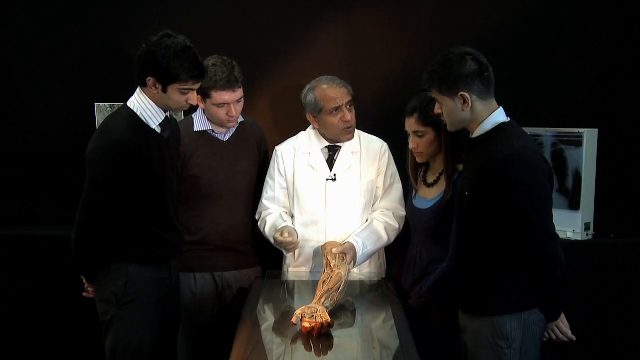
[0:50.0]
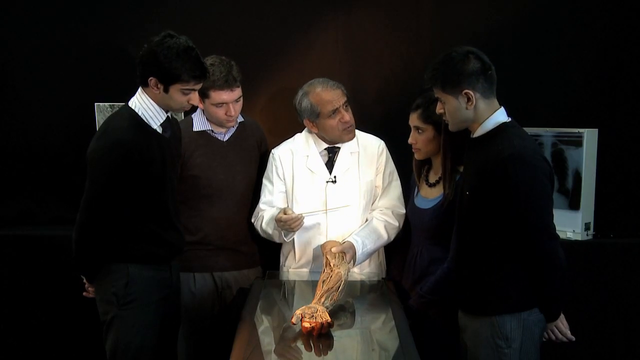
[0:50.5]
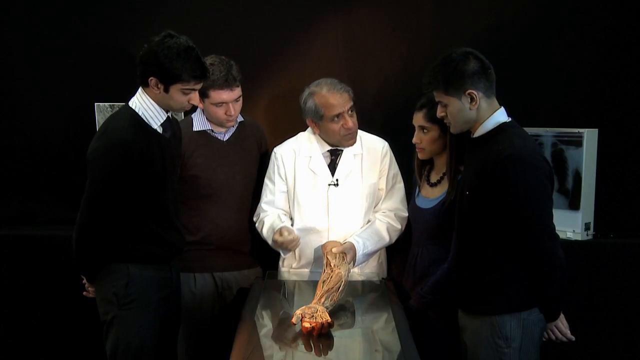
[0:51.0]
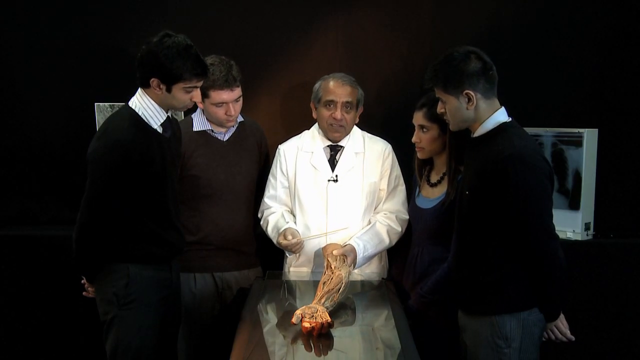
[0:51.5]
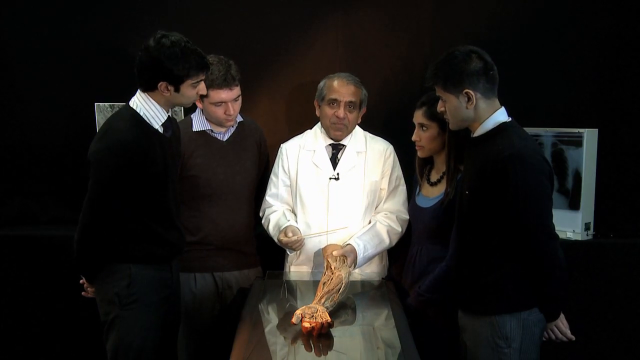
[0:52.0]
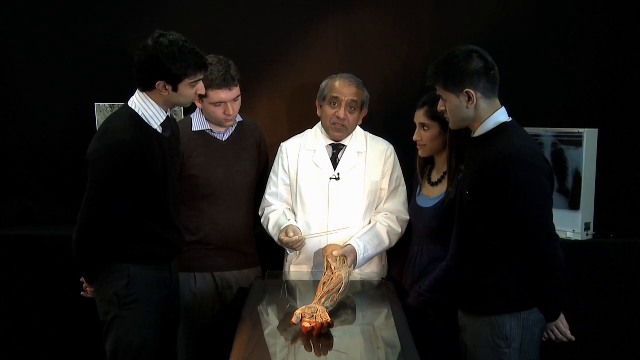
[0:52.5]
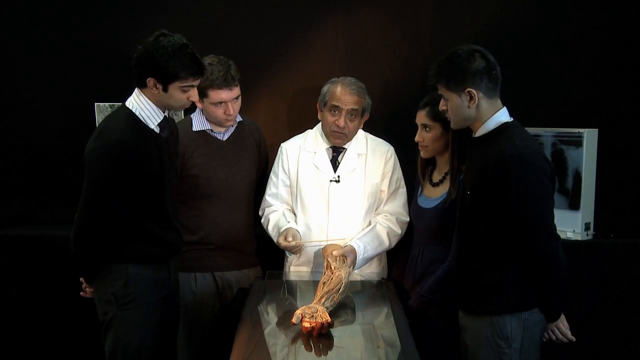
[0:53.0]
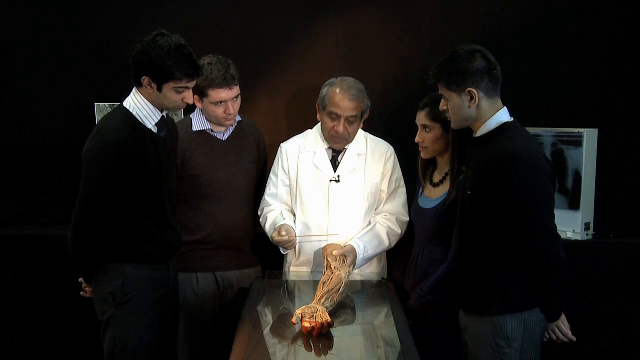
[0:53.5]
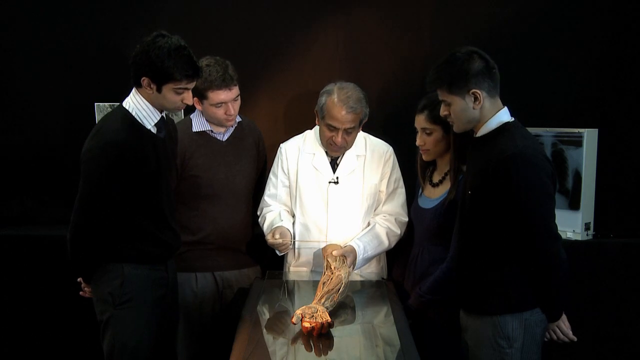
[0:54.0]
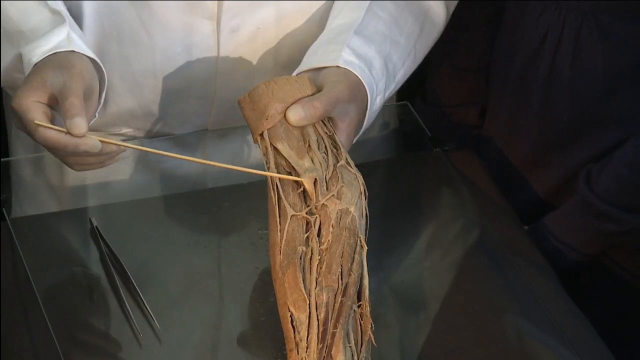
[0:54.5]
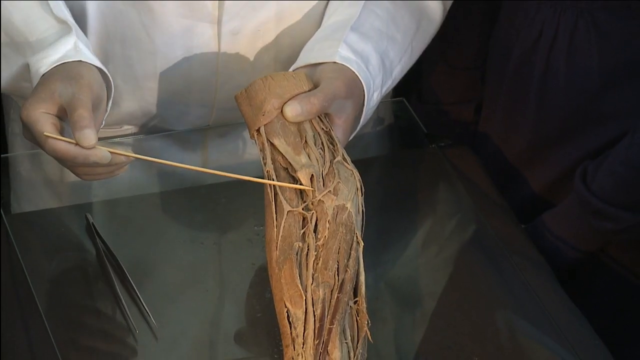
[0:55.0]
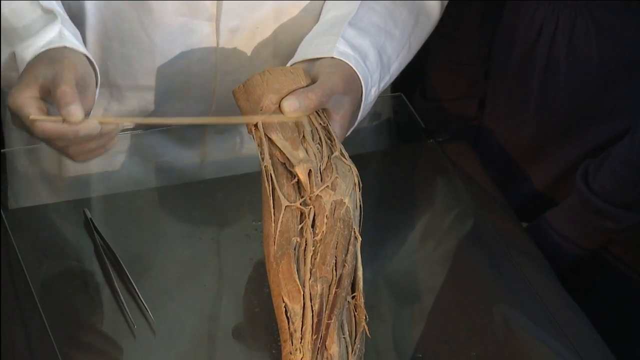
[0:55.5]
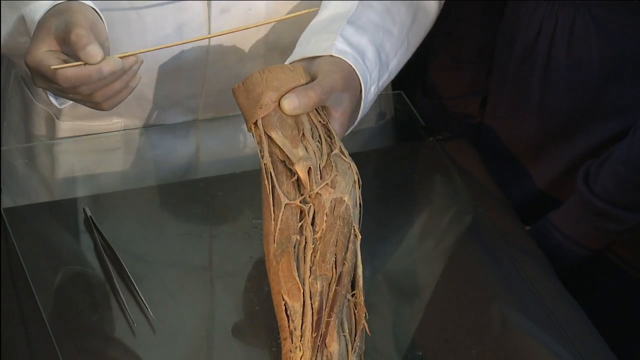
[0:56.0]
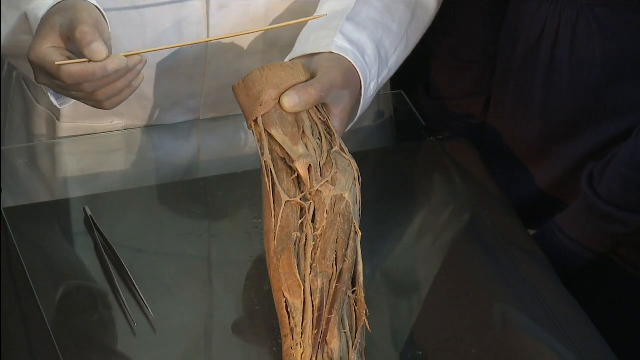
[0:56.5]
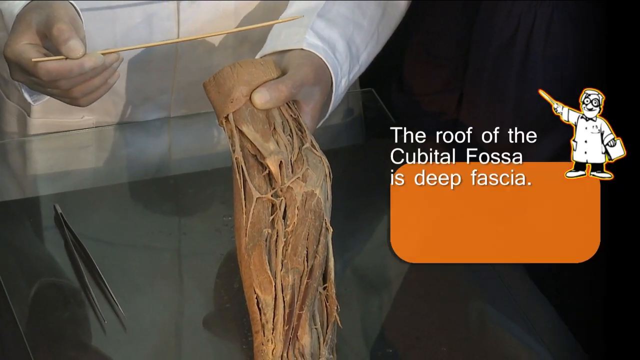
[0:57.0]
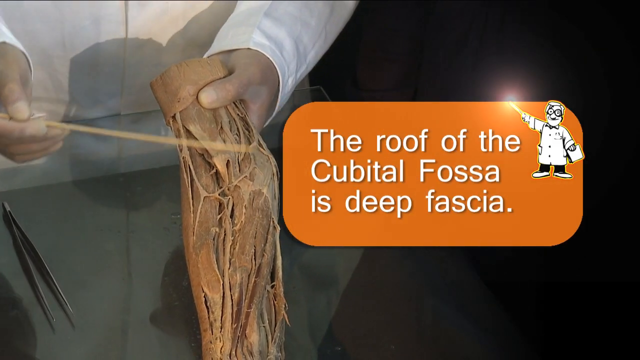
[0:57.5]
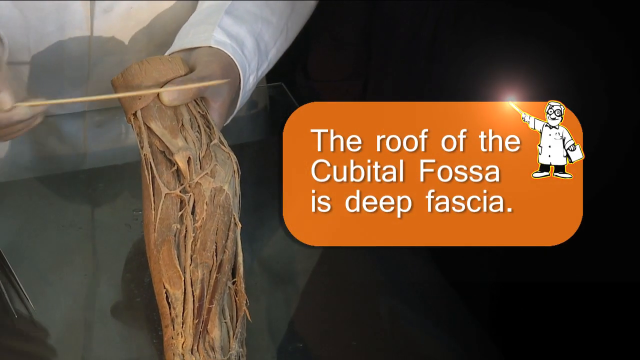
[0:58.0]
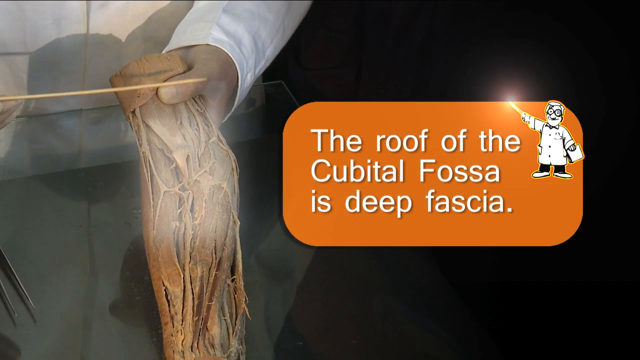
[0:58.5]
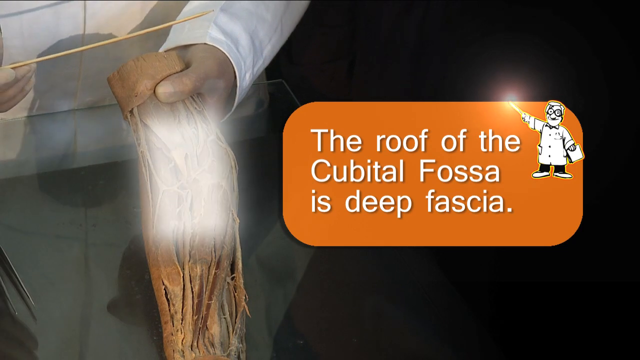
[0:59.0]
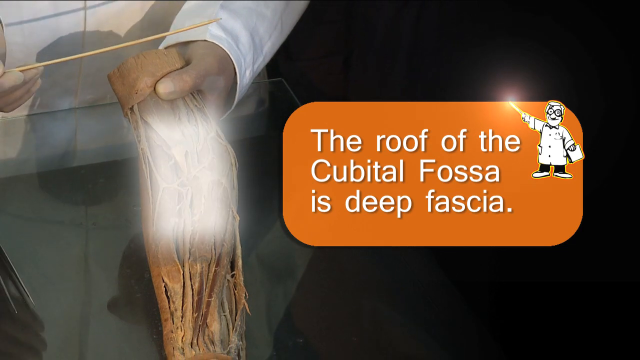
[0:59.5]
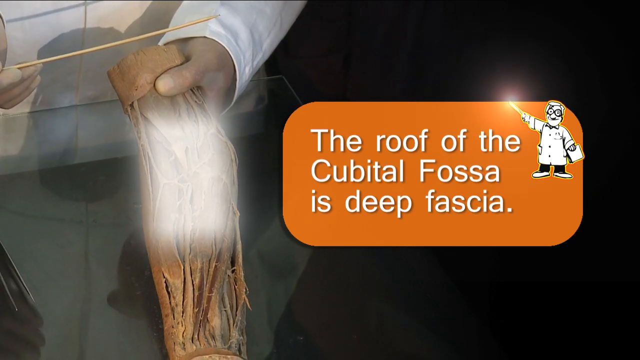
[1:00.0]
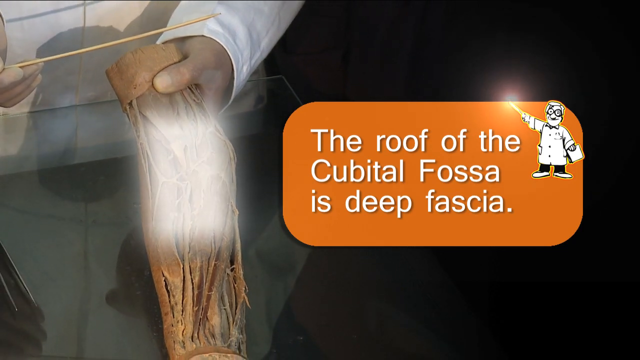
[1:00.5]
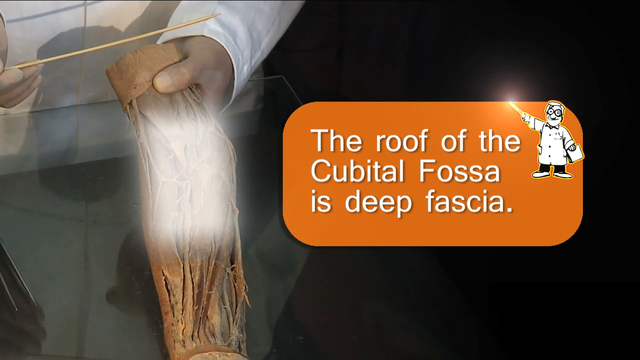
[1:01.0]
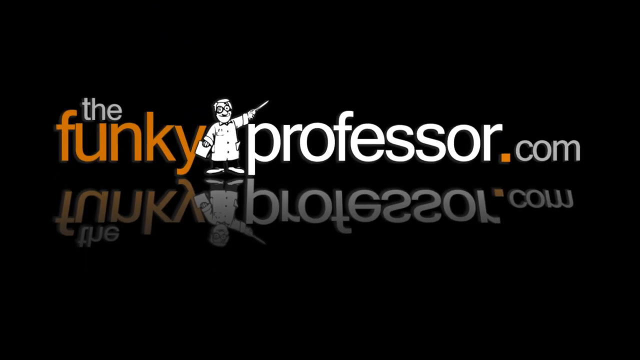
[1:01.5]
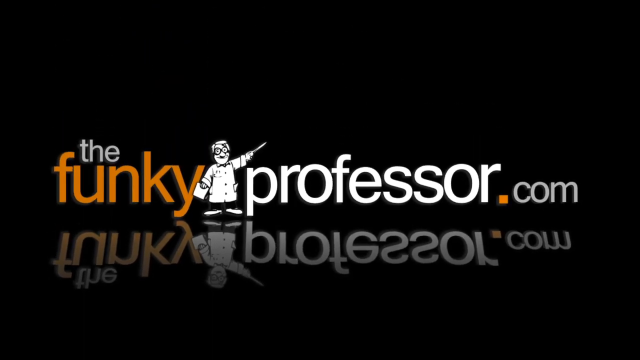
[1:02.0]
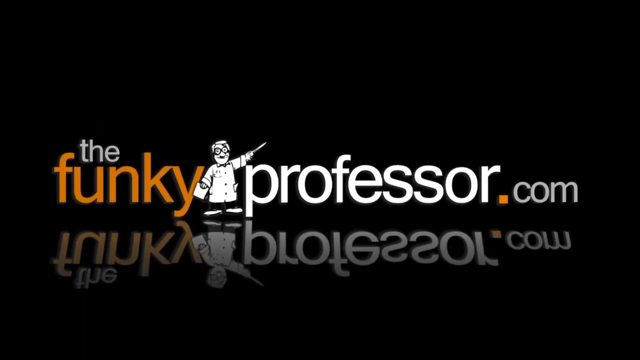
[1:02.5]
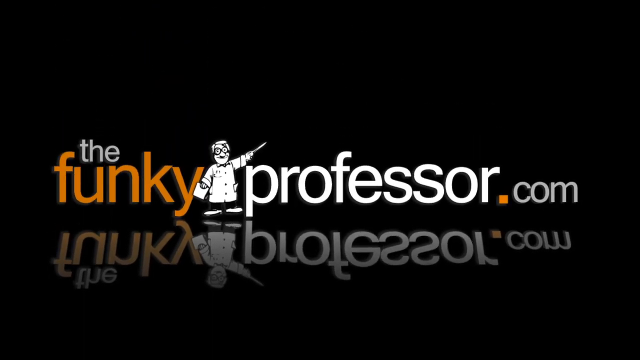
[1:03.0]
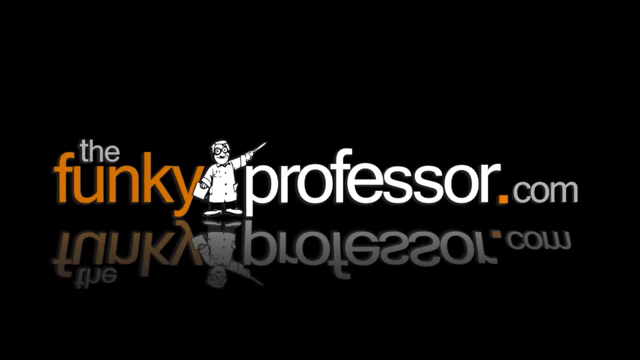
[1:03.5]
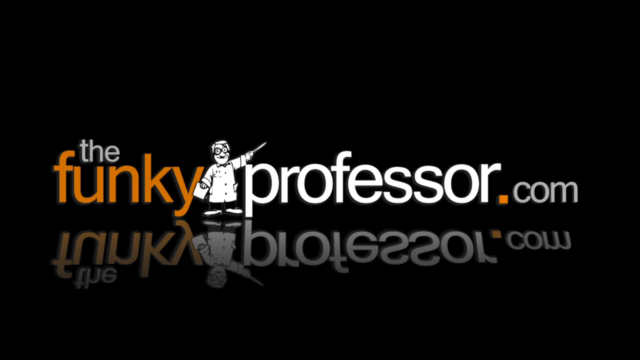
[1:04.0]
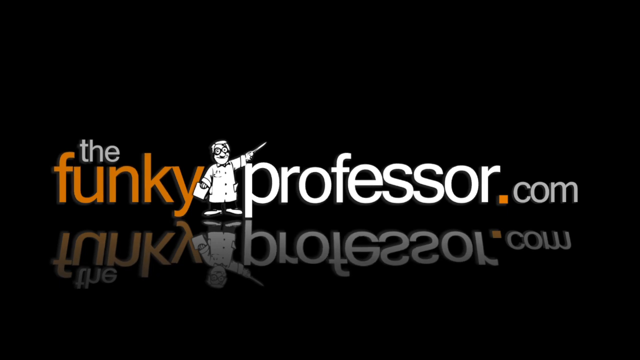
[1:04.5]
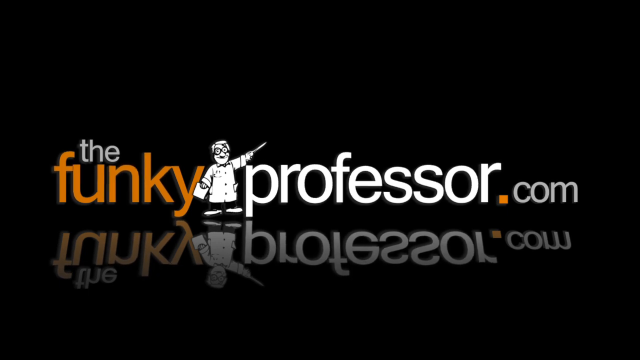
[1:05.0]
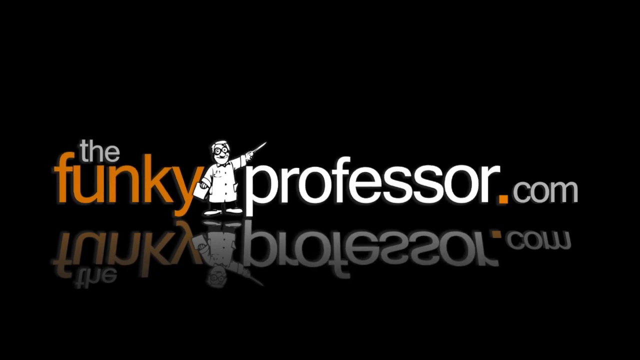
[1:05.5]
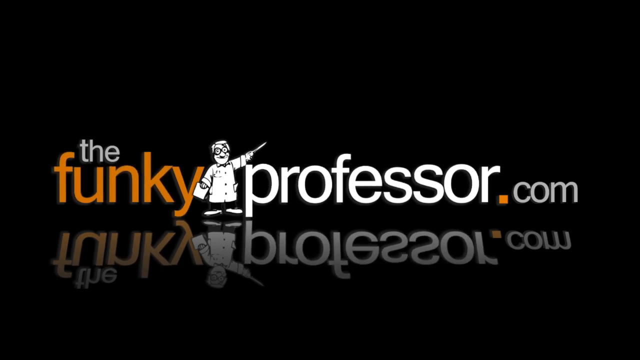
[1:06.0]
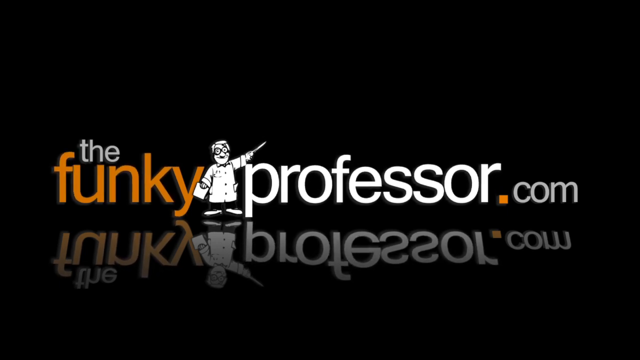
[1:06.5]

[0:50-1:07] The professor is still pointing to the arm, holding it in his left hand. He looks to his left and talks to the students, then looks back at the camera and back down at the arm, referring to it. Next to the arm, below the glass, there are what look like tweezers on the glass table. A caption overlays the video reading "the roof of the cubital fossa is the deep fascia", set in something like an orange rectangle with rounded corners, with the logo of what looks like a doctor with a wand at the top right of the caption. The cubital fossa is then highlighted with a white rectangle that is almost fuzzy, not completely opaque and a bit translucent. The video ends on a black screen showing the same starting screen as before, reading "thefunkyprofessor.com", with the text reflected glossily below it on the black screen.